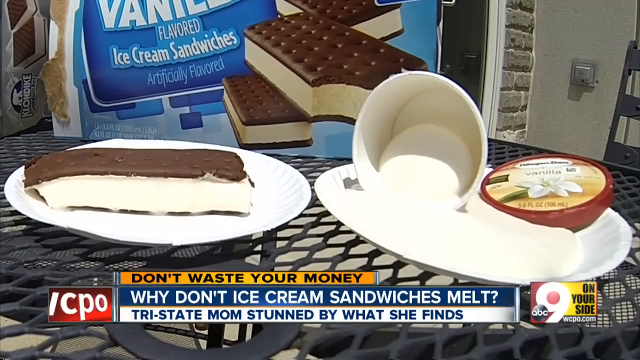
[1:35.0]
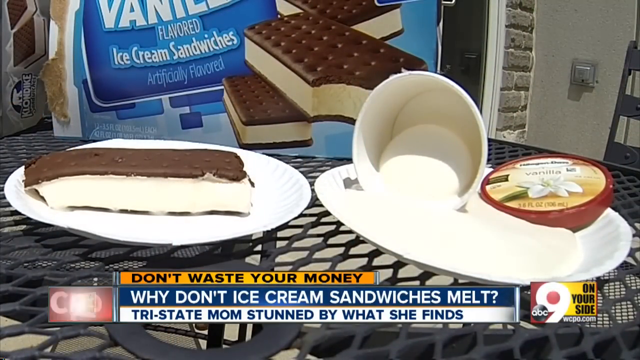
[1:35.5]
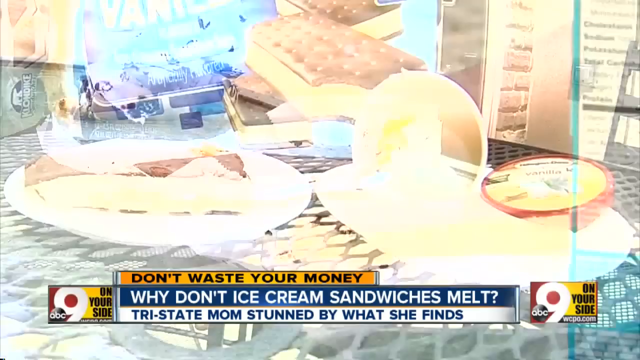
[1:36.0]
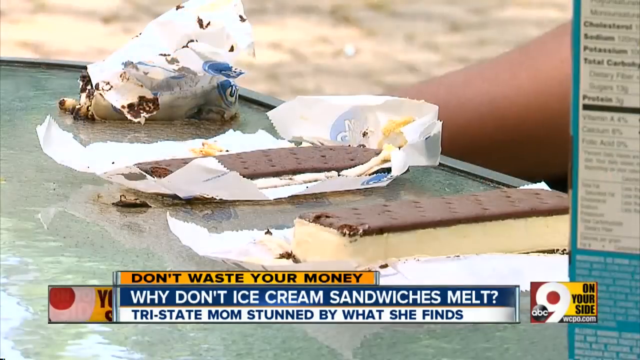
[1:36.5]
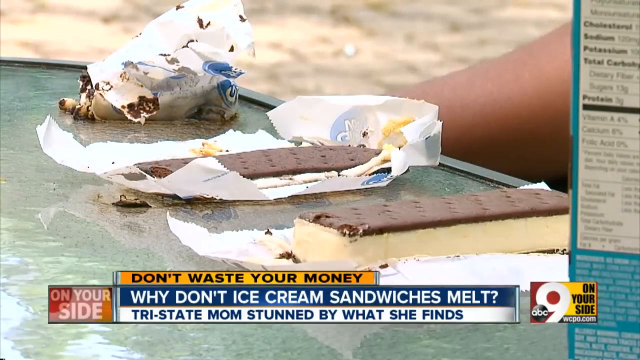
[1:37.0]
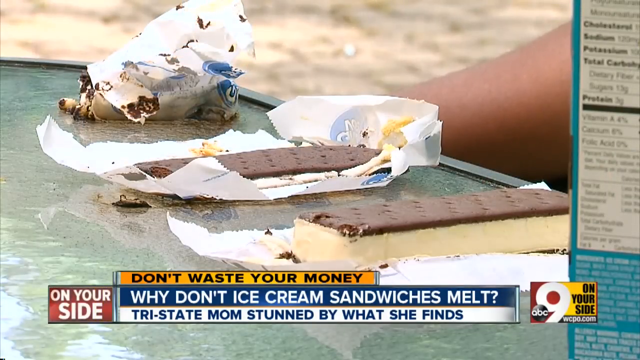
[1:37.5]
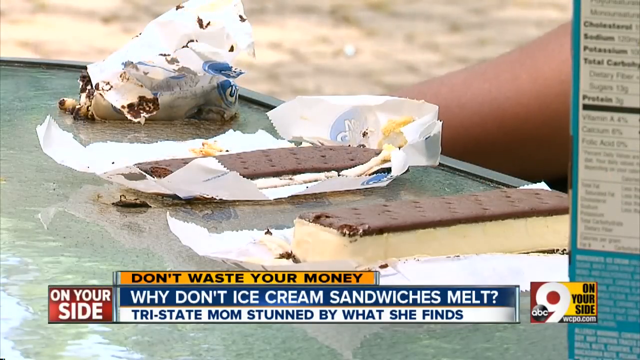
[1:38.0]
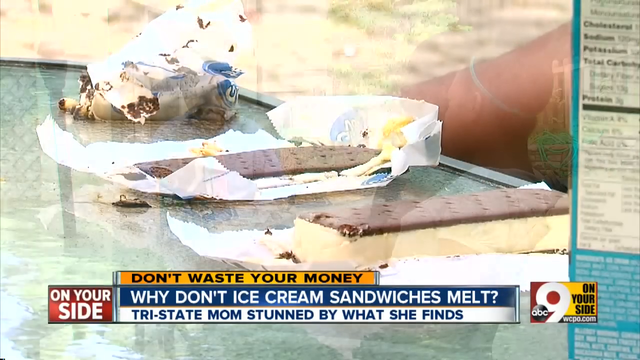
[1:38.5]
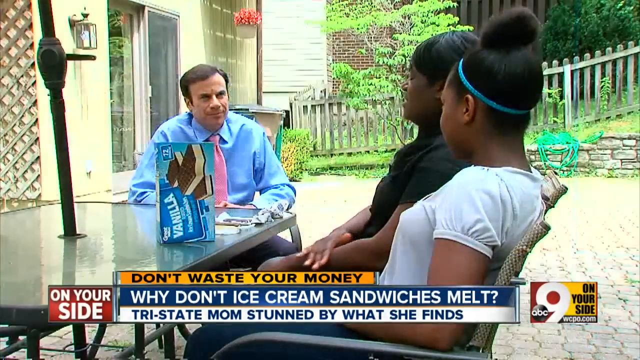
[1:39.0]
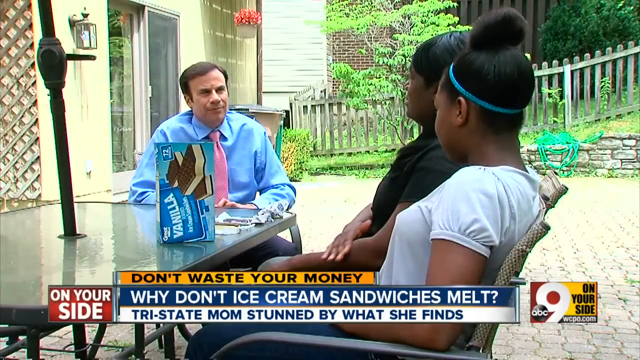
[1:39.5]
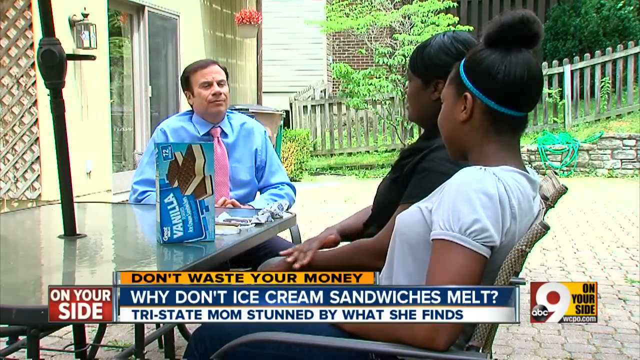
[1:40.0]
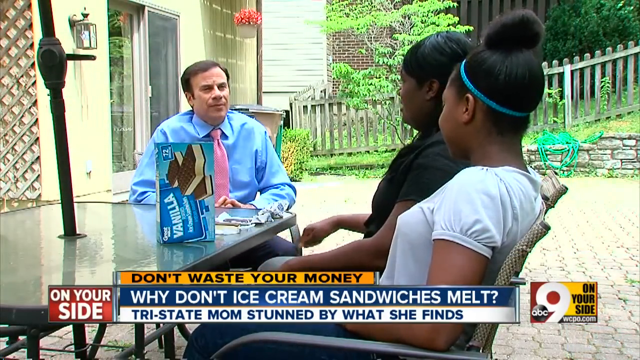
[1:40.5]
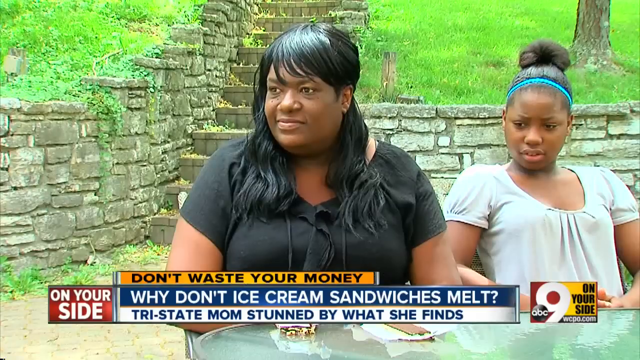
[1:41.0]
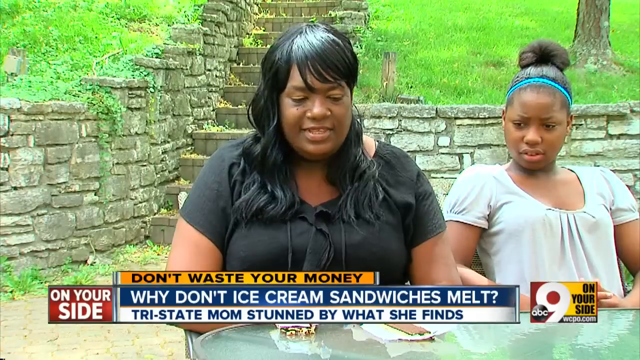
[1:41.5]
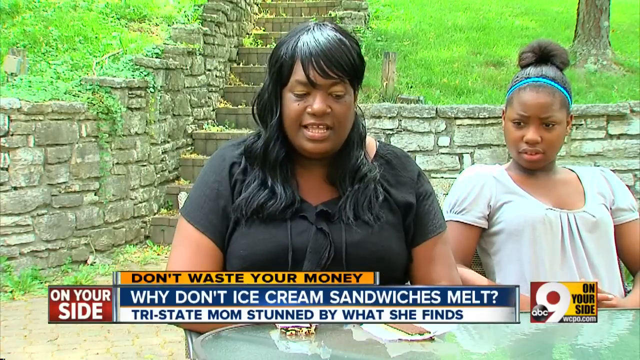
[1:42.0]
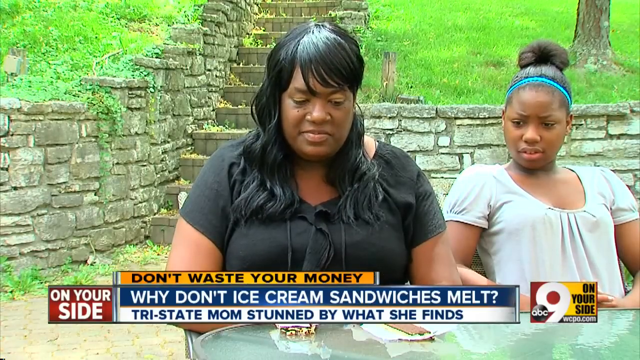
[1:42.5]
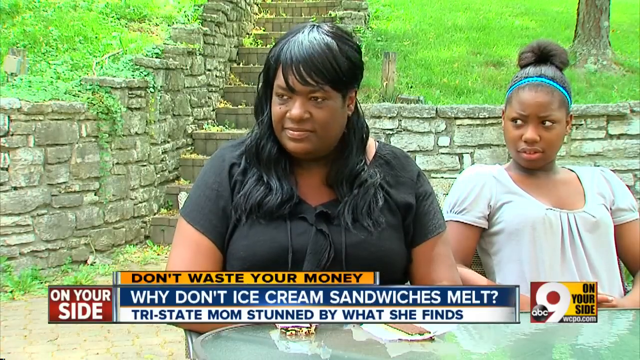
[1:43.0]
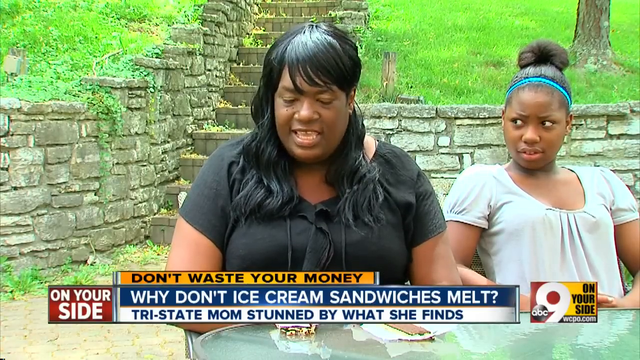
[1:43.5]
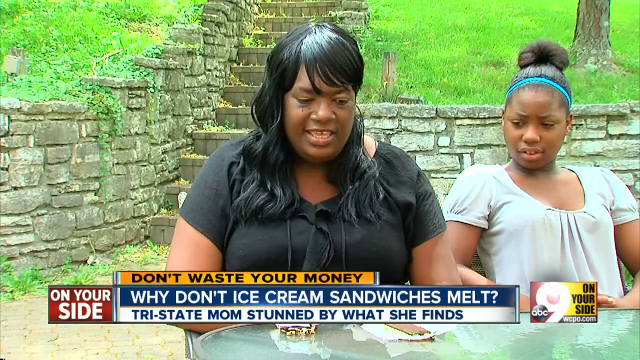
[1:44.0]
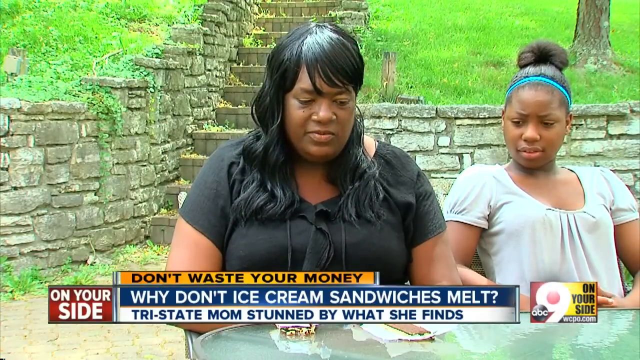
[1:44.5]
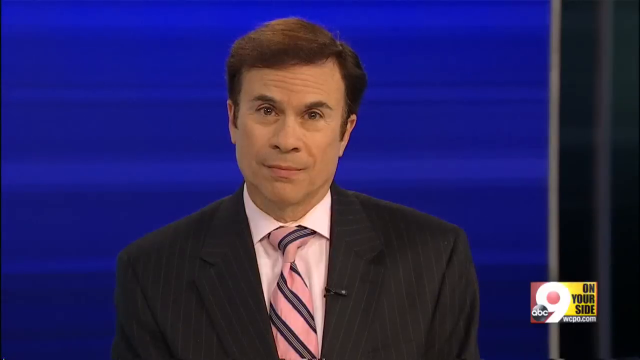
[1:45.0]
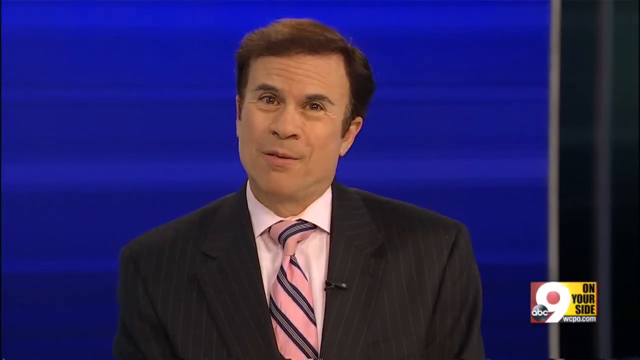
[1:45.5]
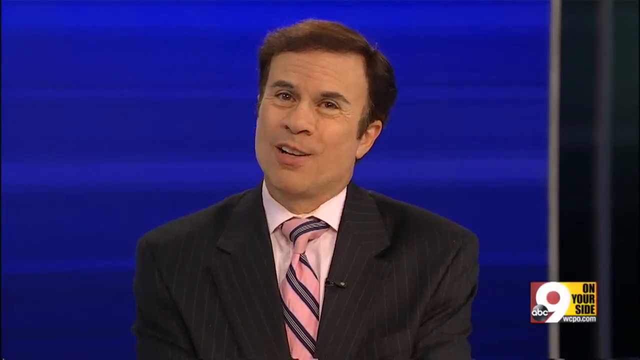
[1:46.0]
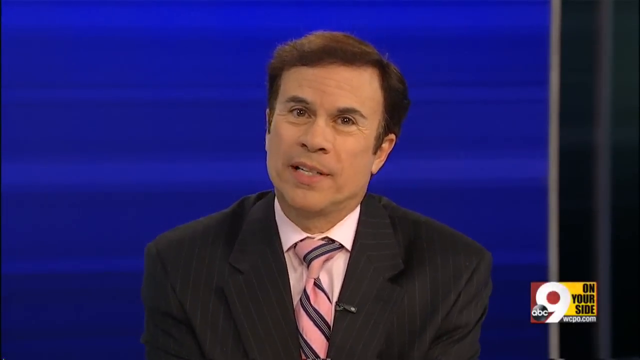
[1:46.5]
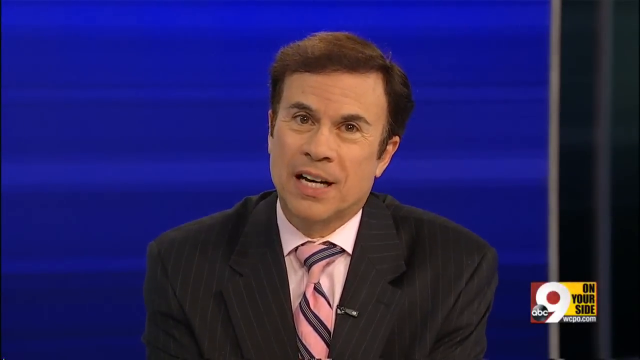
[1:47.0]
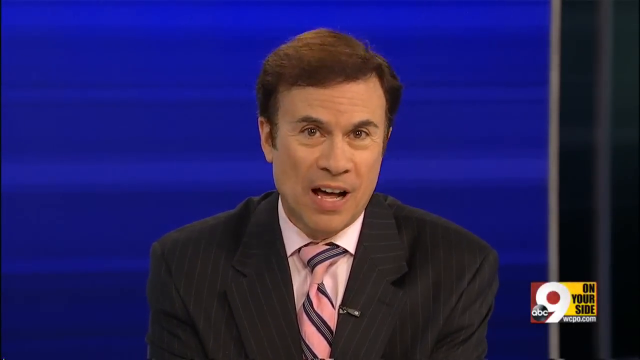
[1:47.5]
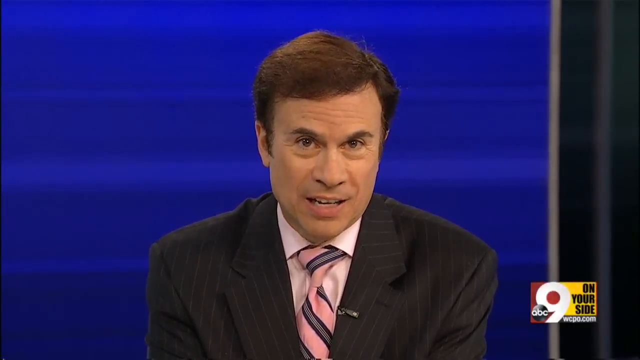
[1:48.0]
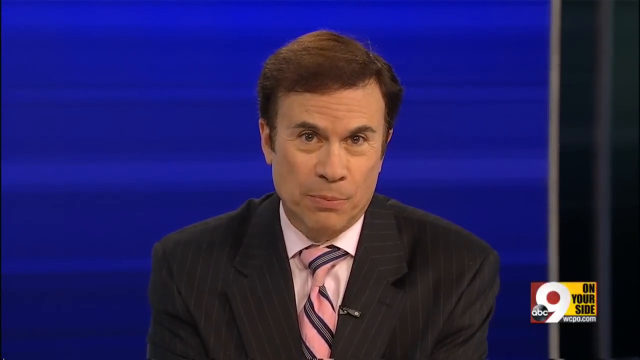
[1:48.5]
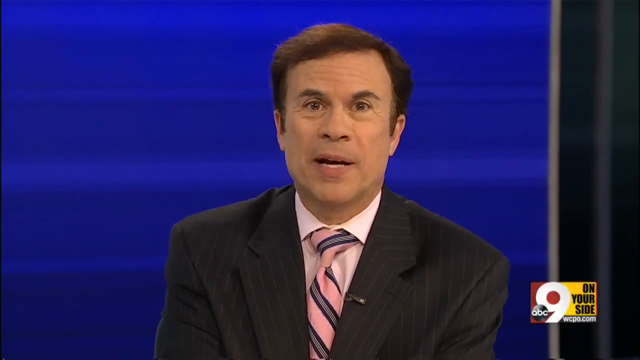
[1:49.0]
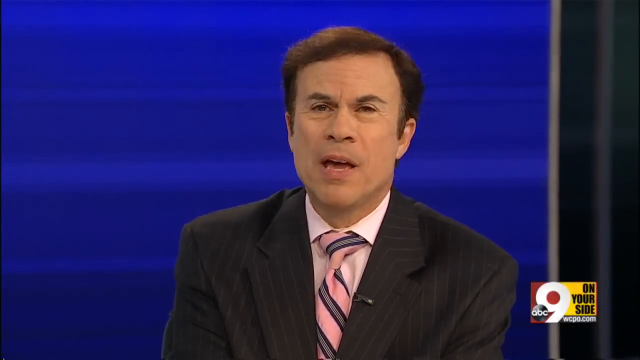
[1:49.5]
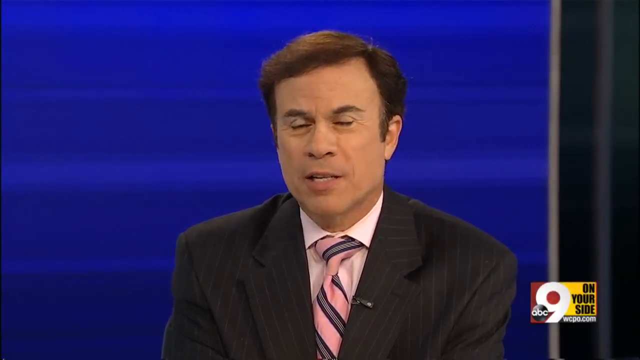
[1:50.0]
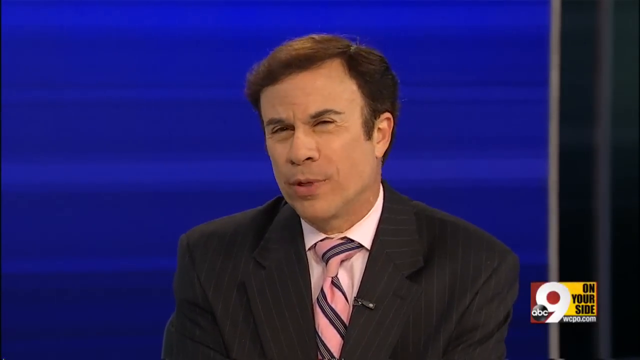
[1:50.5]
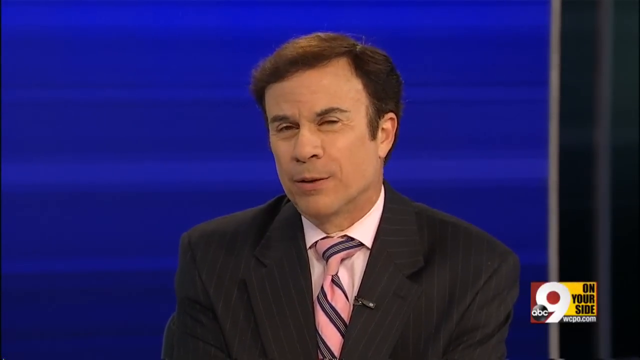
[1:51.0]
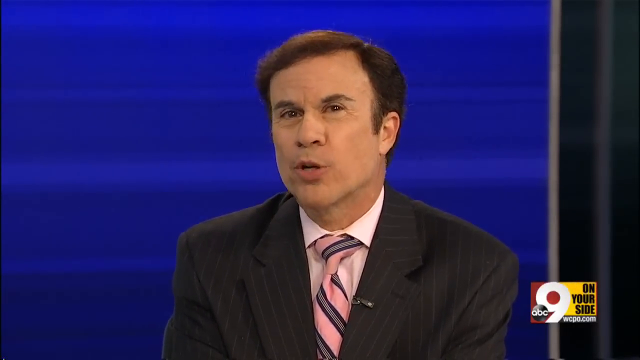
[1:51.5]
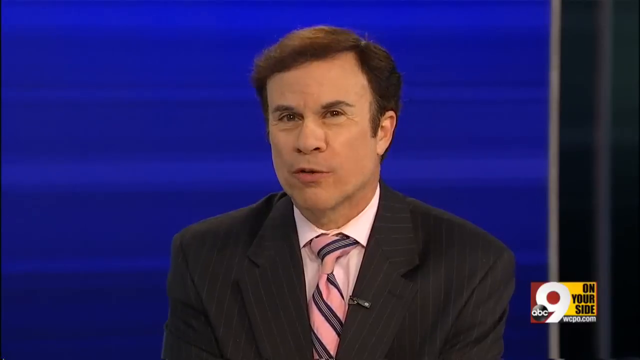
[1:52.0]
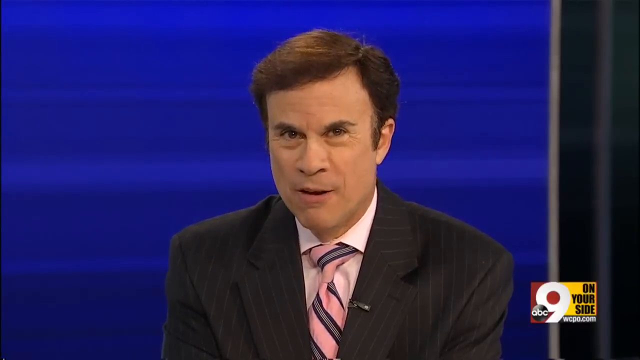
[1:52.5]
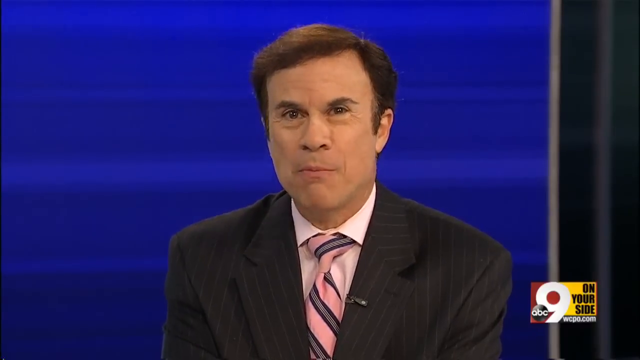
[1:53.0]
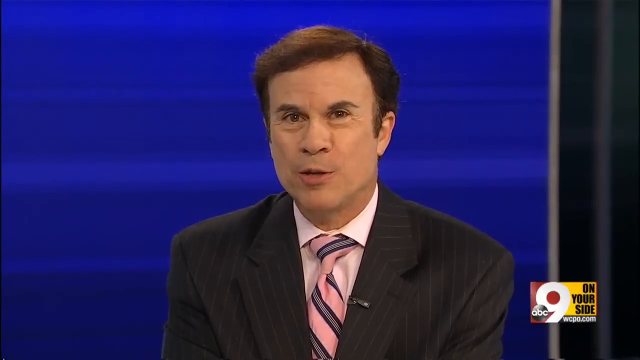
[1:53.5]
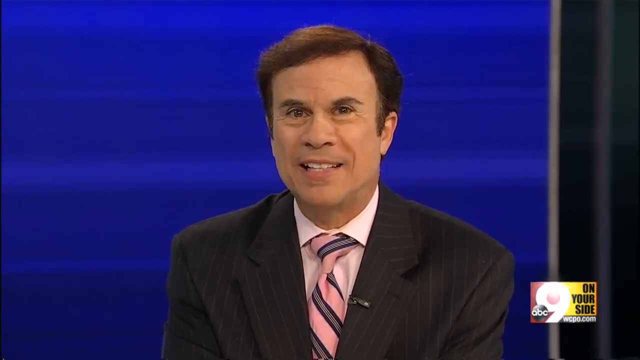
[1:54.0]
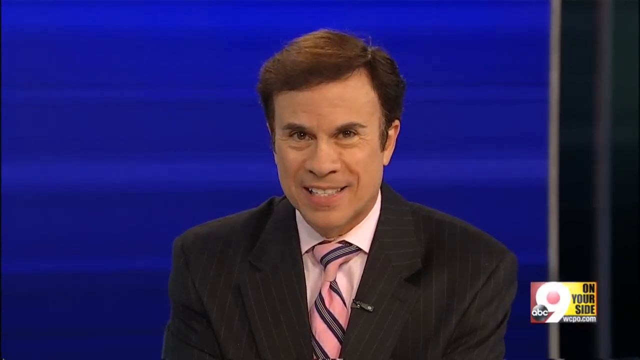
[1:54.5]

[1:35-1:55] Two white paper plates are on a black mesh wire picnic table, with the contents kind of somewhat melting, and boxes reading "Klondike" and "ice cream sandwich" behind them. A graphic at the bottom reads "don't waste your money. Why don't ice cream sandwiches melt? Tri-state mom stunned by what she finds." To its right a small graphic reads "ABC 9 on your side," and to its left an animated graphic shows the Twitter symbol and "ABC 9 on your side." The video cuts to an African American woman and an African American girl sitting on a bench, apparently being interviewed by the news. It then cuts to an older Caucasian man sitting at a desk like a news anchor, with a blue screen behind him, wearing a black sports jacket and a white, black and blue striped tie. He talks to the camera with a slight smile. He is then also shown interviewing the African American woman and child.